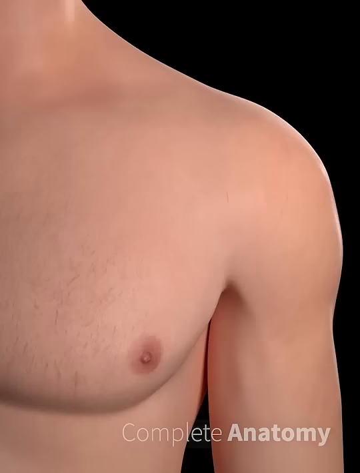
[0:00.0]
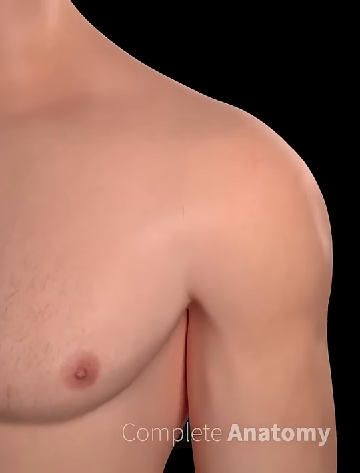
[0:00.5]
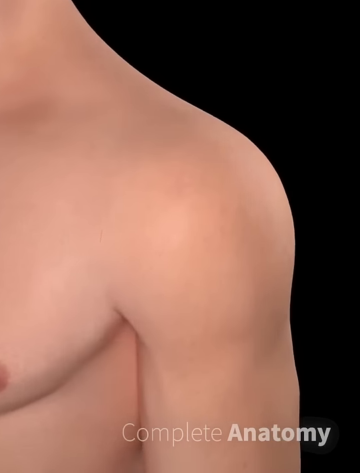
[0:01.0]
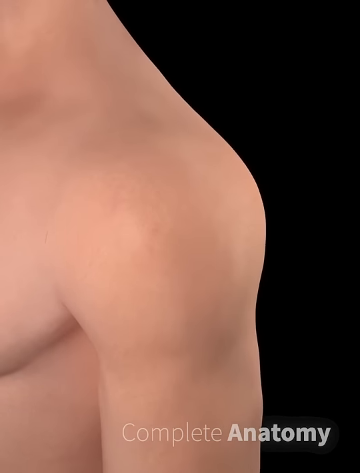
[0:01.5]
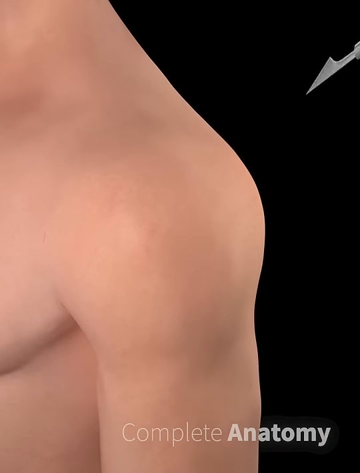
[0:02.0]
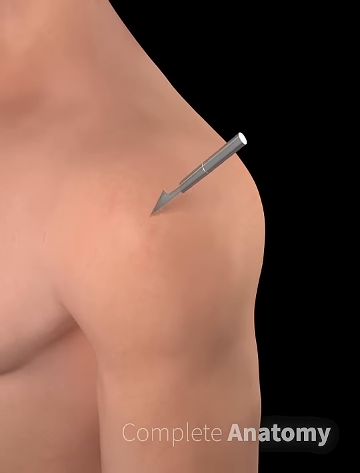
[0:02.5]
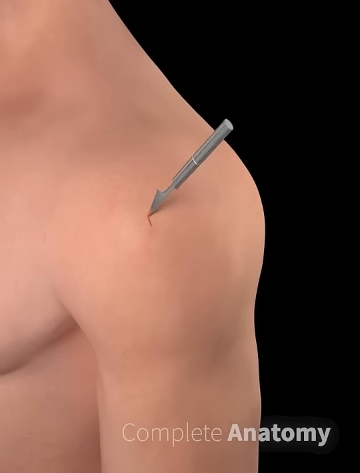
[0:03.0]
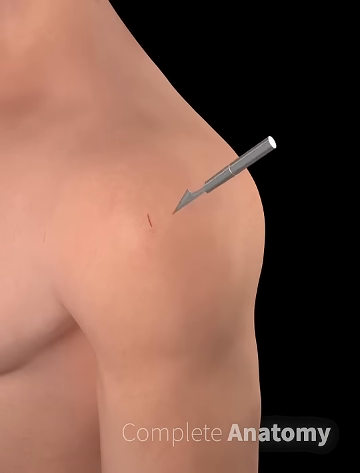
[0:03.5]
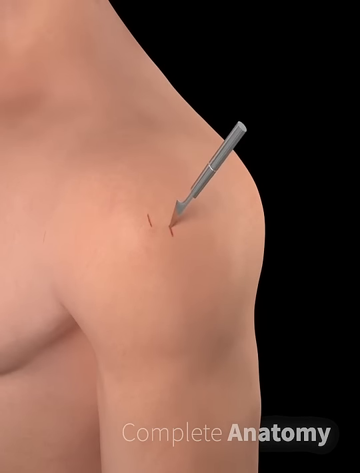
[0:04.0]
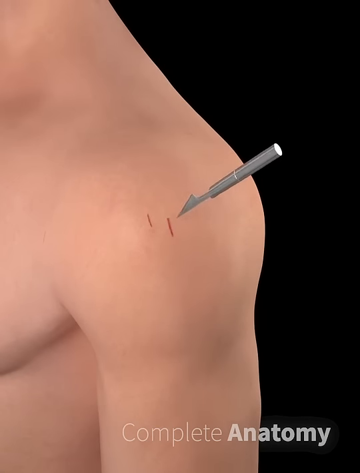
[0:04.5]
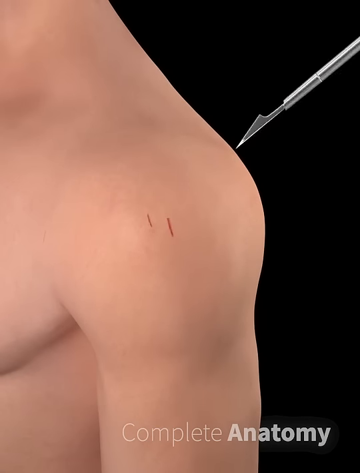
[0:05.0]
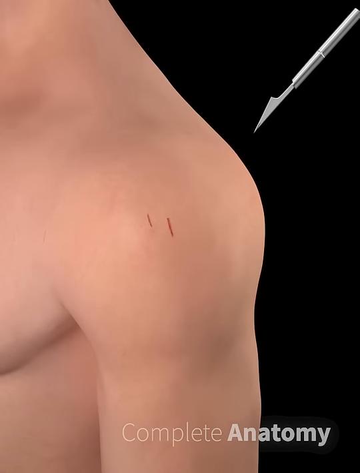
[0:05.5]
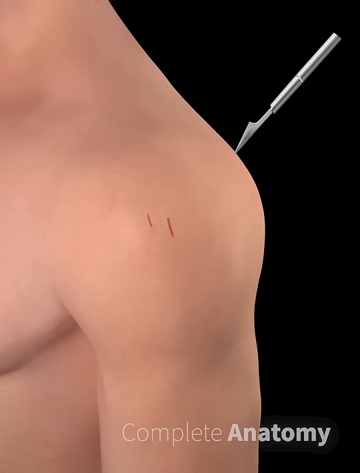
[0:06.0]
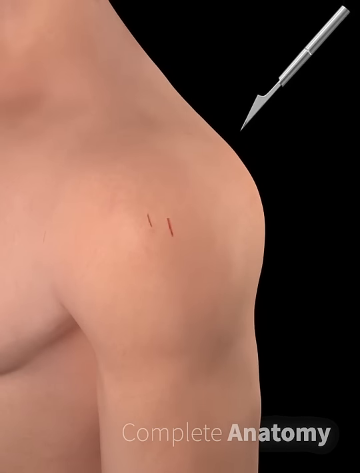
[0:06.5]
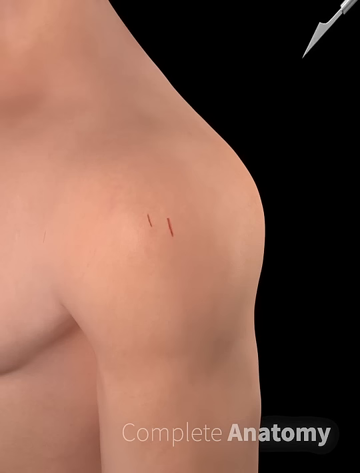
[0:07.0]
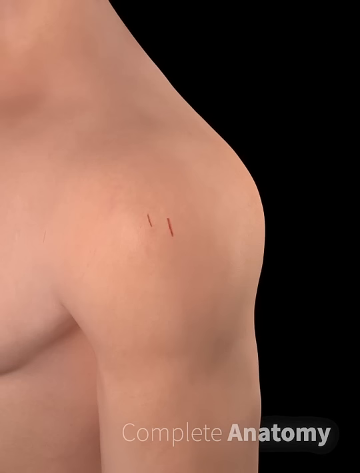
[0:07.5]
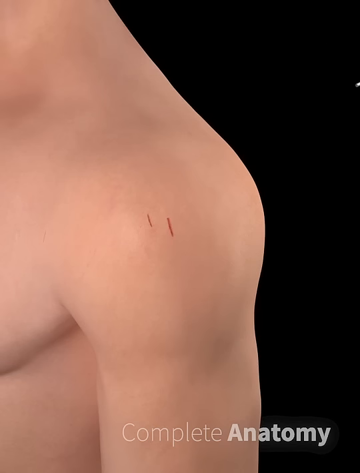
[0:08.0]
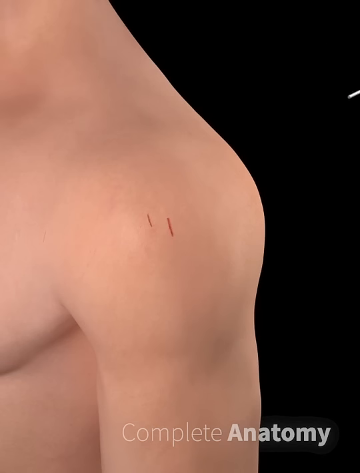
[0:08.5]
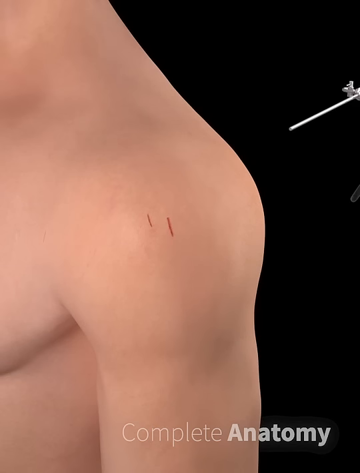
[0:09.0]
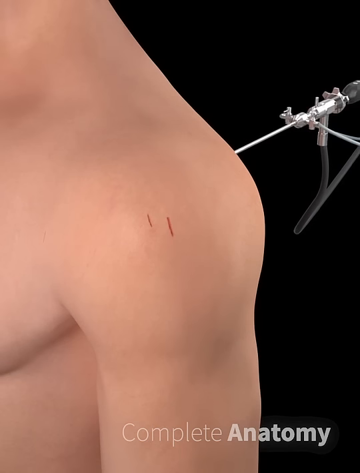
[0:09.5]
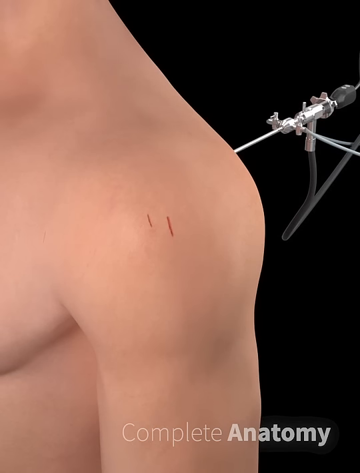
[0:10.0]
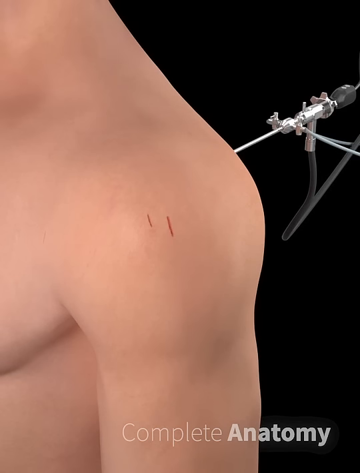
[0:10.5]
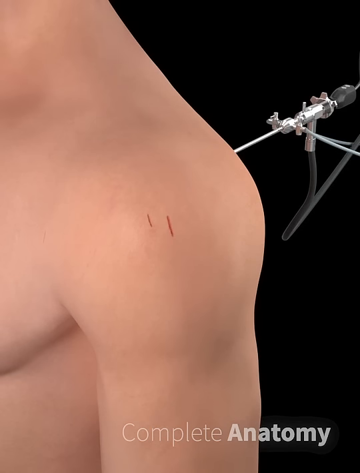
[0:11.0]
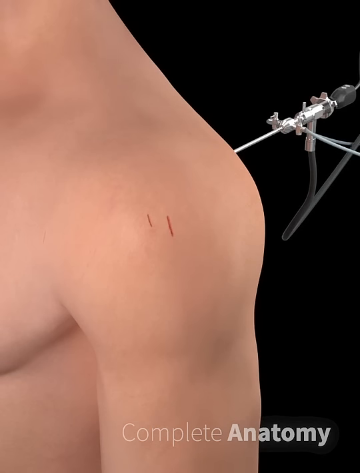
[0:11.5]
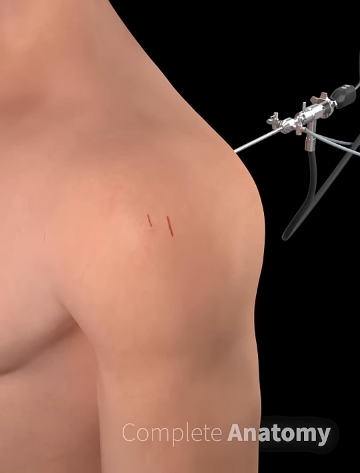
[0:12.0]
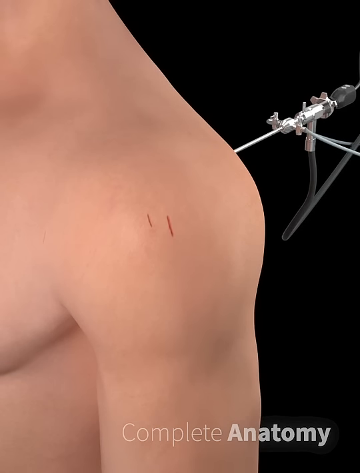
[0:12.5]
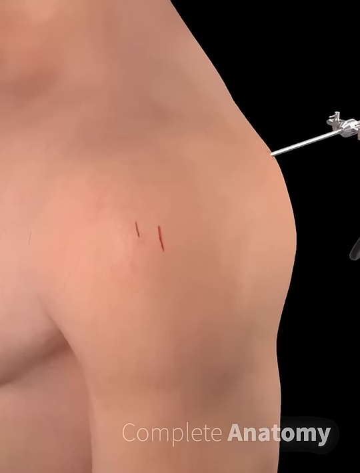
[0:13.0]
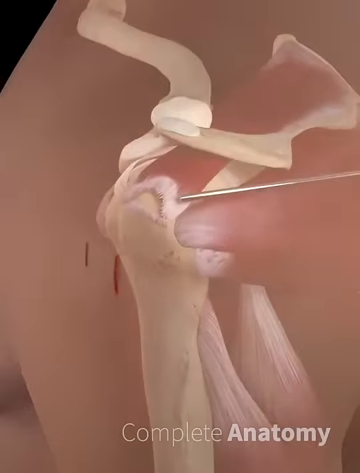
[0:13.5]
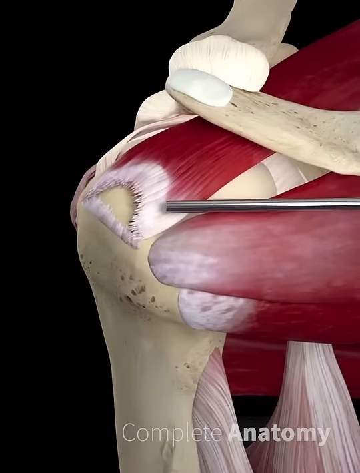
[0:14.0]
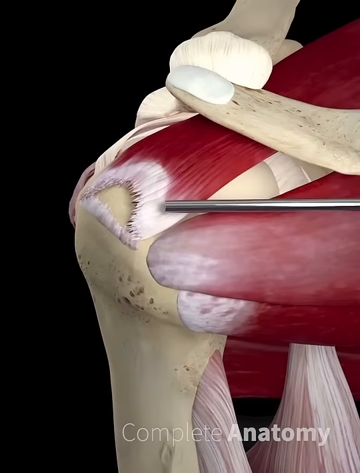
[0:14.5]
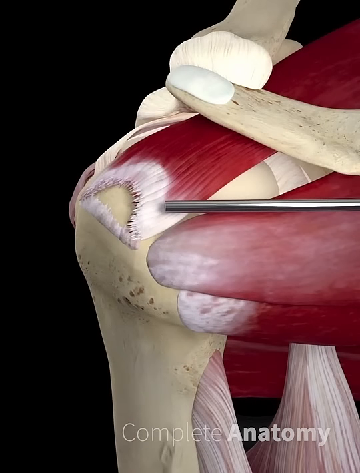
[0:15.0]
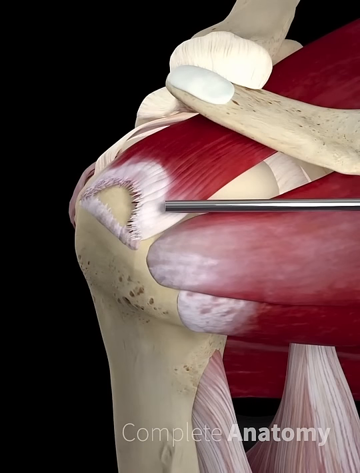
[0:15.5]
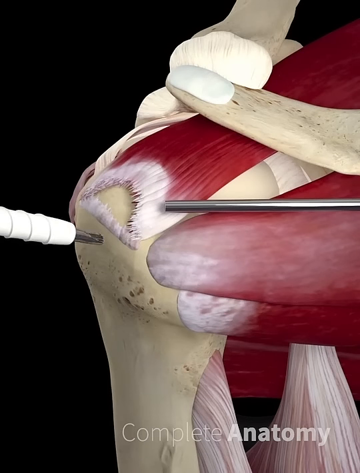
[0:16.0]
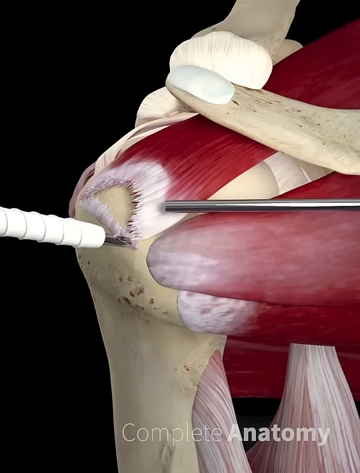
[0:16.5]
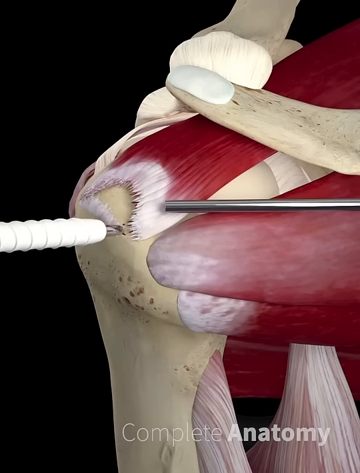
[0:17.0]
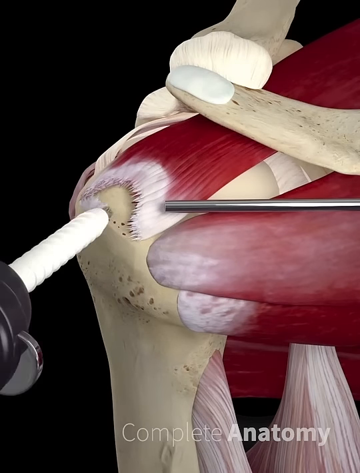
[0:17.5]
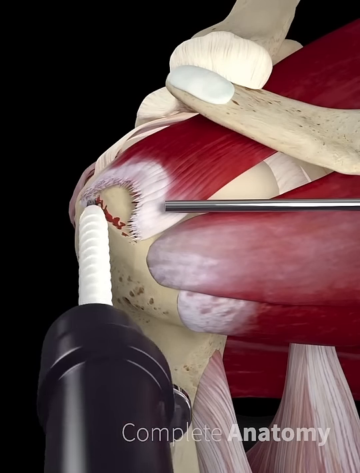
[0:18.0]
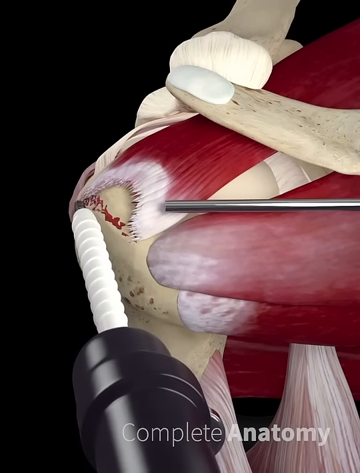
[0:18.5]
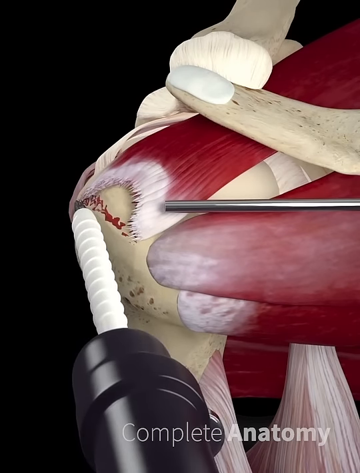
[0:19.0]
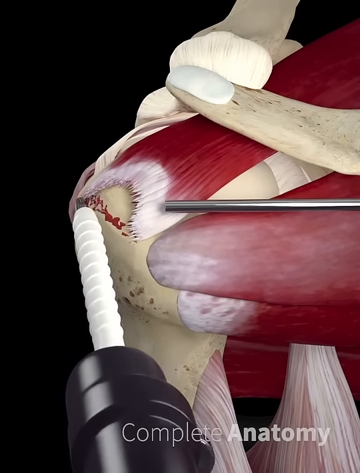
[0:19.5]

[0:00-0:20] An AI-generated or animated image of a white male shows his left shoulder, part of his arm, part of his neck and his left pec. The words "complete anatomy" appear in the bottom right-hand corner. A silver scalpel makes two very small cuts on the top of his left shoulder and then one at the very back of his shoulder. A metal rod or drill goes into the back of the shoulder, and the view shows the inside of his body, such as tendons and muscle. A white drill with a black knob or top brushes away some white material where the silver rod is pointing.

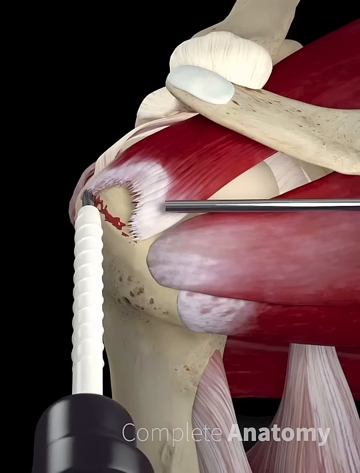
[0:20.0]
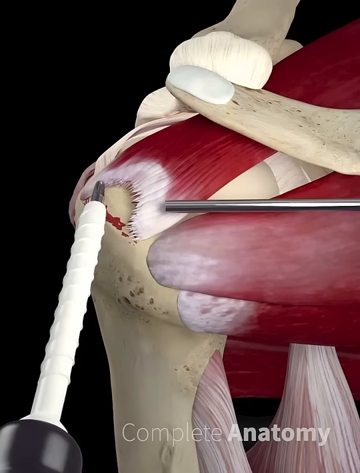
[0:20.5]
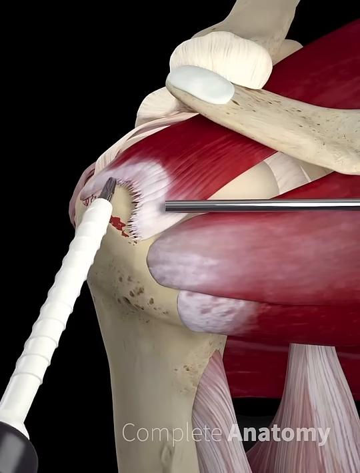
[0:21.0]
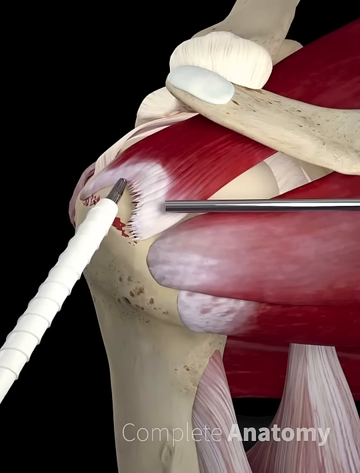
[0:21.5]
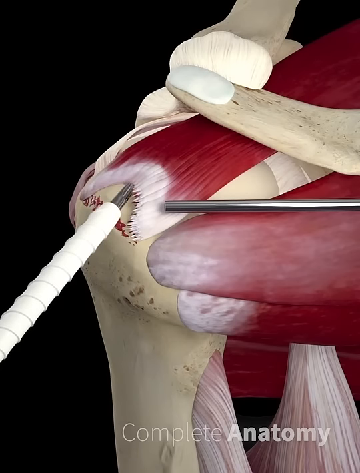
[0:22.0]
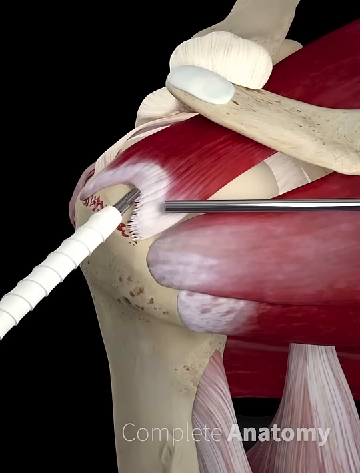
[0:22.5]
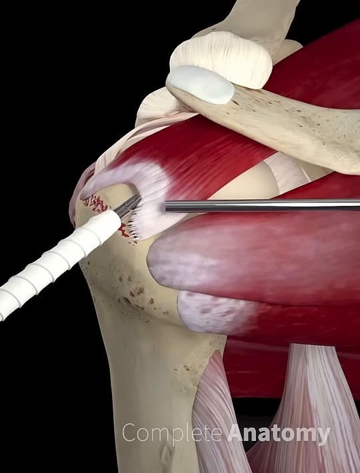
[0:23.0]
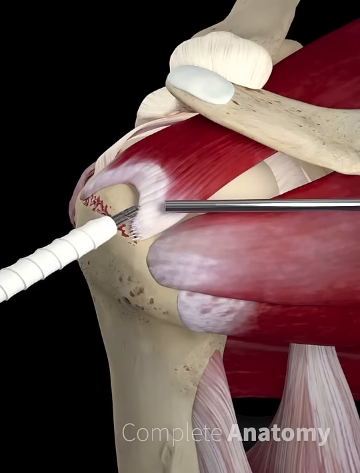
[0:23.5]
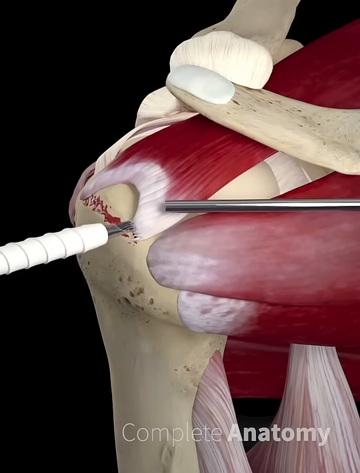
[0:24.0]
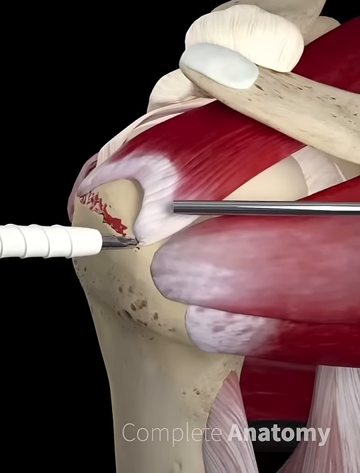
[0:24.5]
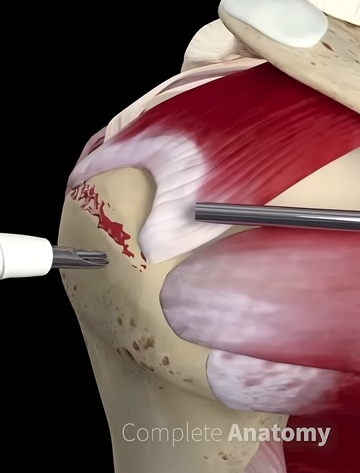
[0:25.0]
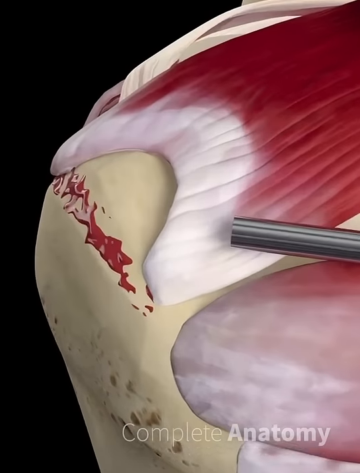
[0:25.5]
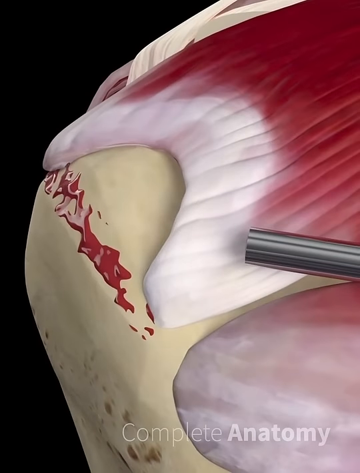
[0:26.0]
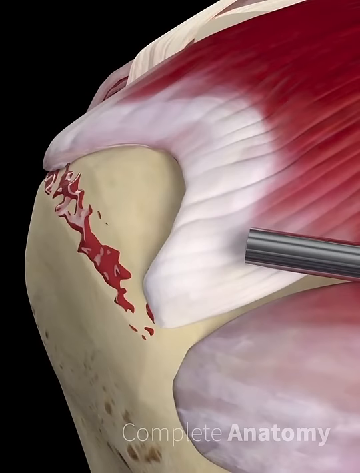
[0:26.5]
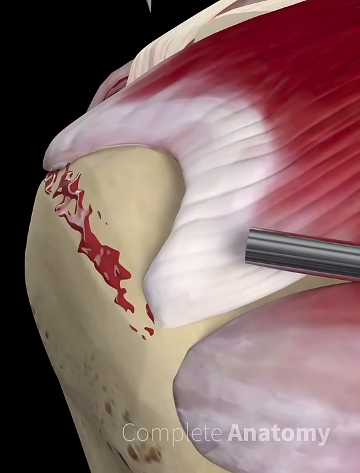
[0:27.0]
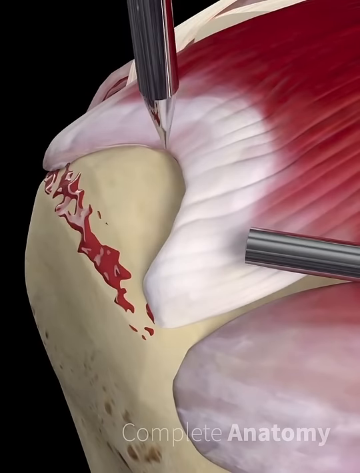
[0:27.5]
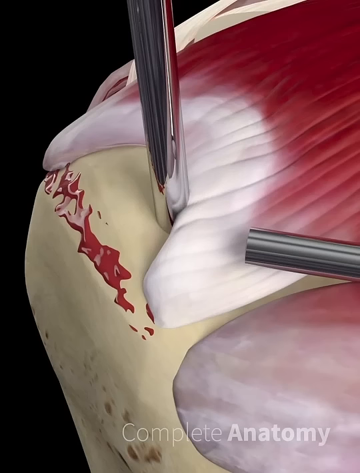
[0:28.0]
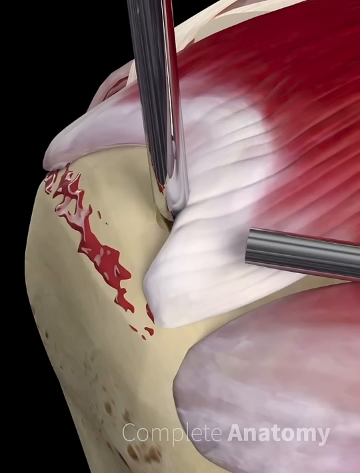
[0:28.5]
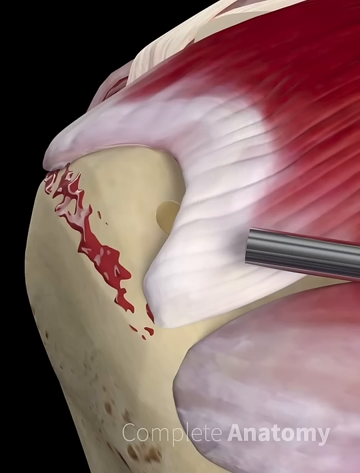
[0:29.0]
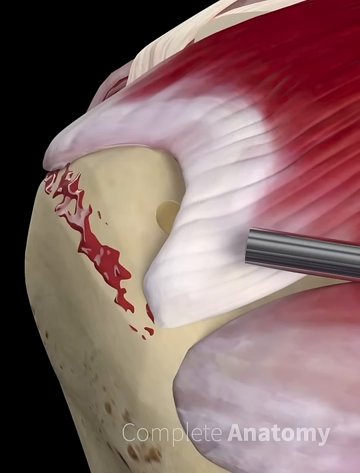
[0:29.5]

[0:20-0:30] The metal rod points to what seems to be a muscle or tendon on the left shoulder. A white drill with a silver tip and a black handle or top brushes away and blends some white material, unclear whether tendon or muscle, smoothing it where there are rough edges. A silver tube or drill then comes in and makes a hole in an off-white, beige part, possibly bone. The words "complete anatomy" remain in the bottom right-hand side of the video.